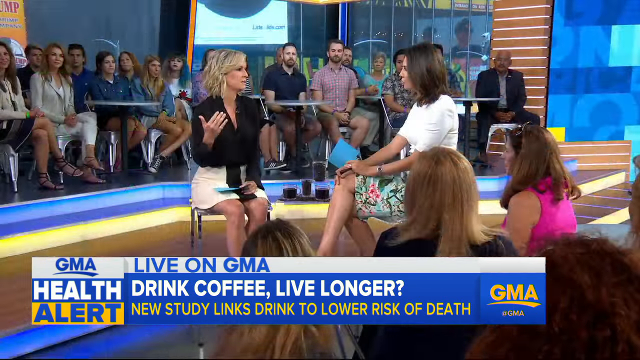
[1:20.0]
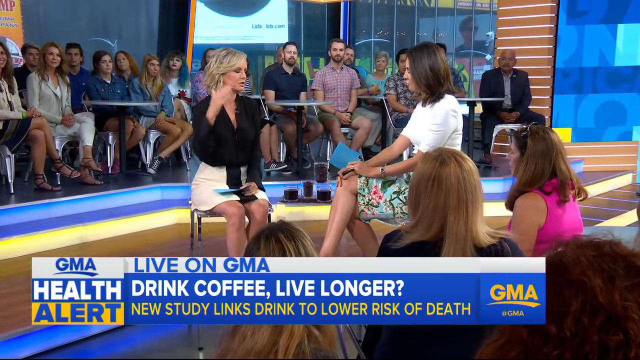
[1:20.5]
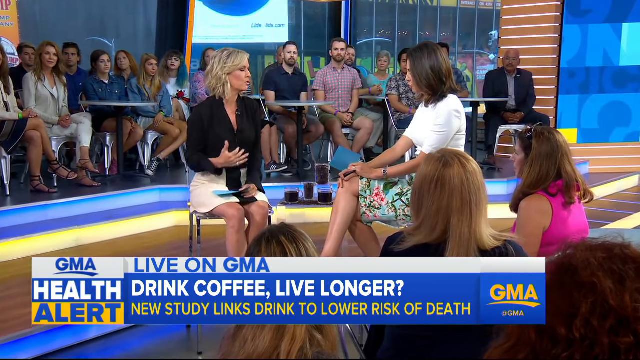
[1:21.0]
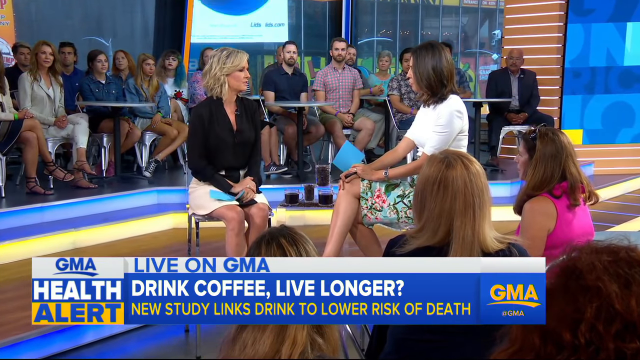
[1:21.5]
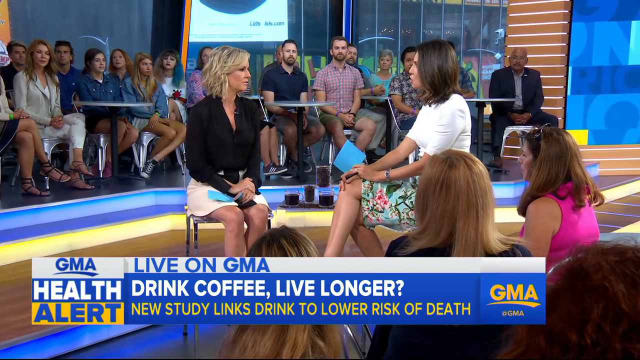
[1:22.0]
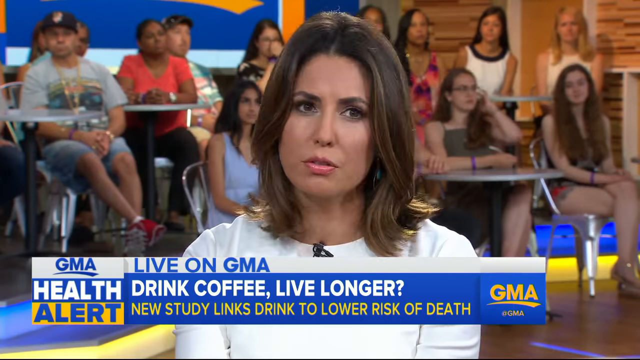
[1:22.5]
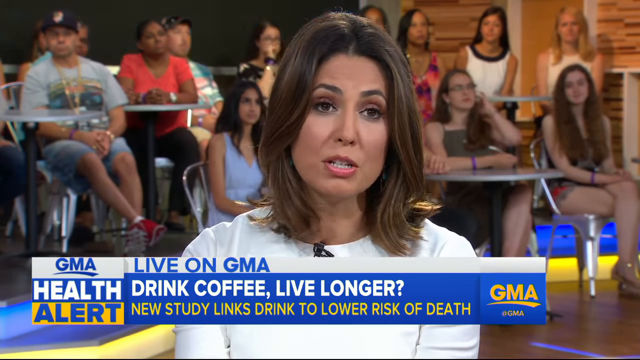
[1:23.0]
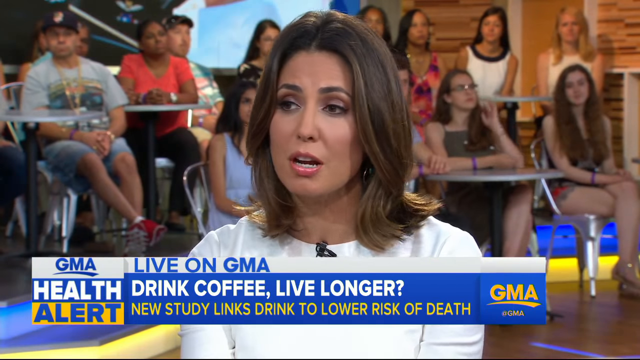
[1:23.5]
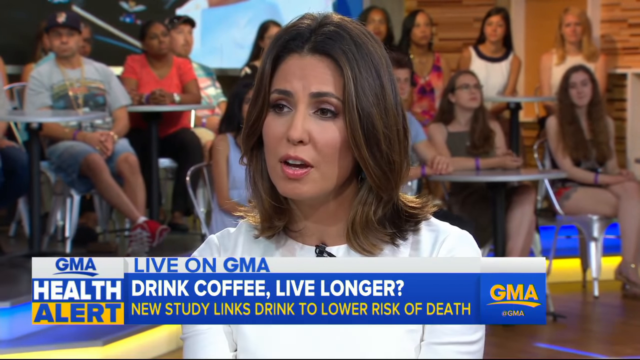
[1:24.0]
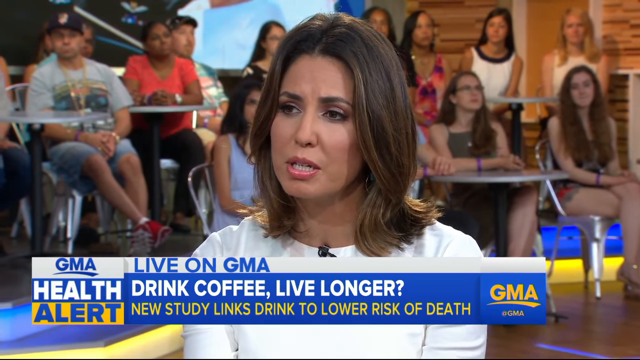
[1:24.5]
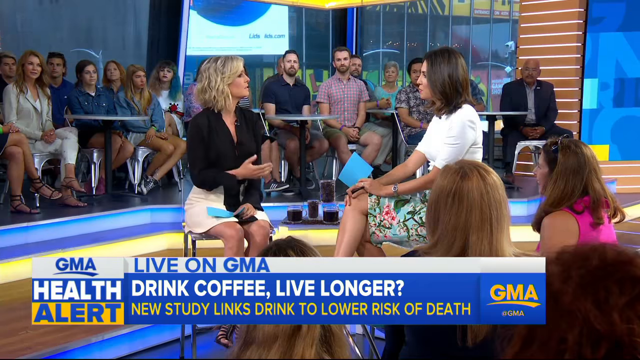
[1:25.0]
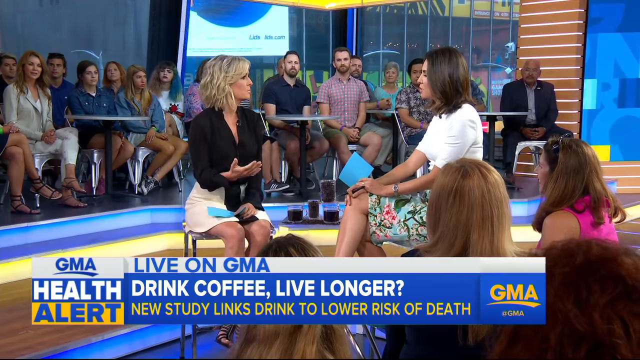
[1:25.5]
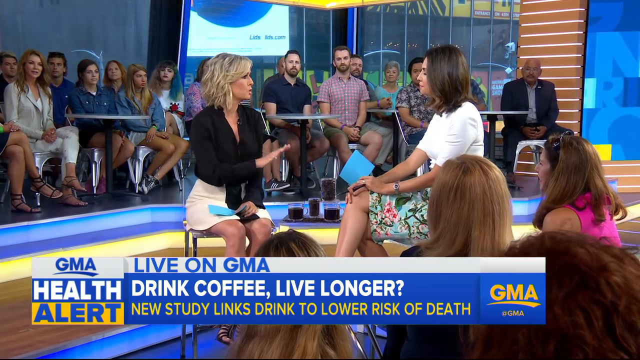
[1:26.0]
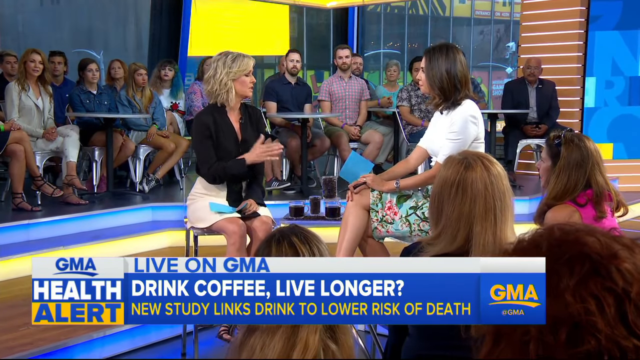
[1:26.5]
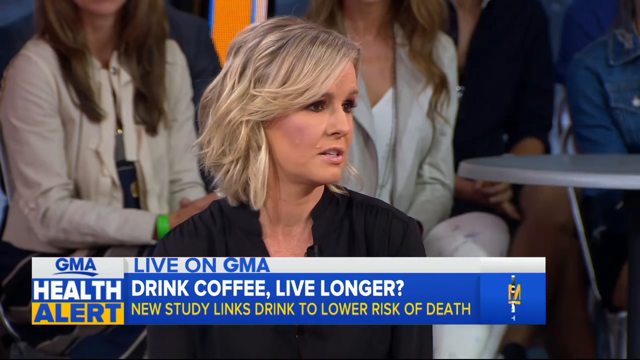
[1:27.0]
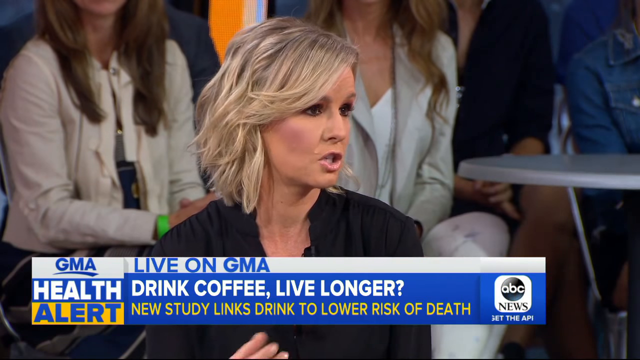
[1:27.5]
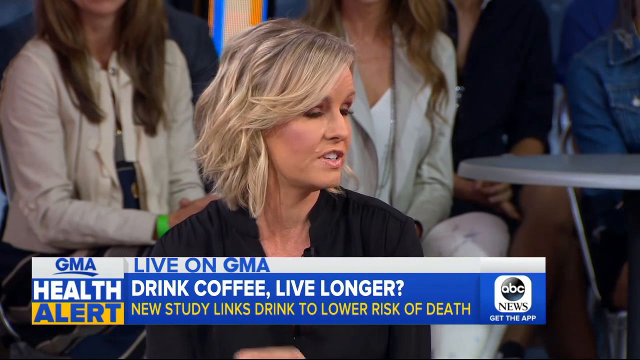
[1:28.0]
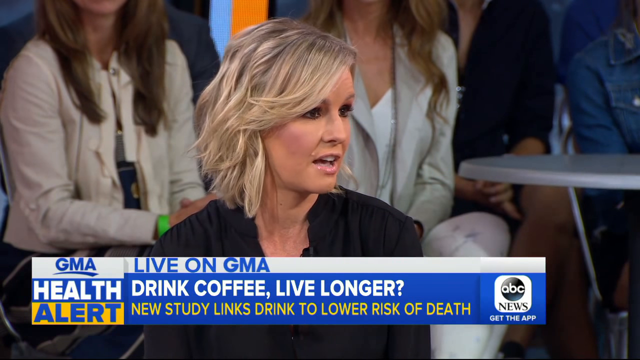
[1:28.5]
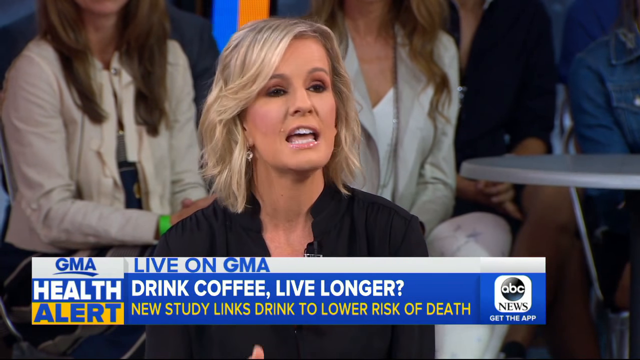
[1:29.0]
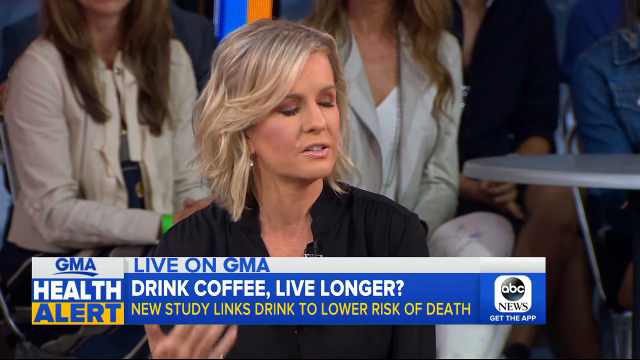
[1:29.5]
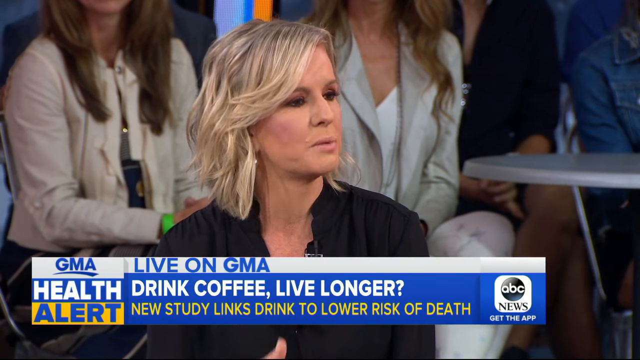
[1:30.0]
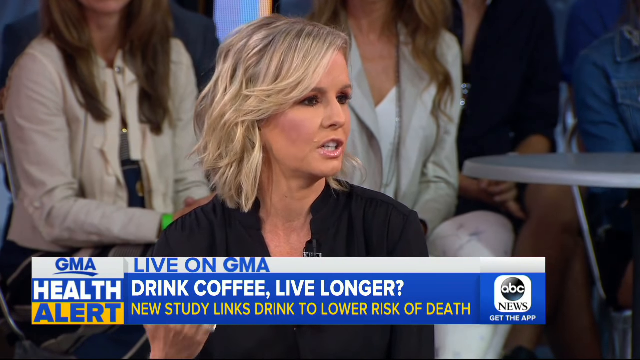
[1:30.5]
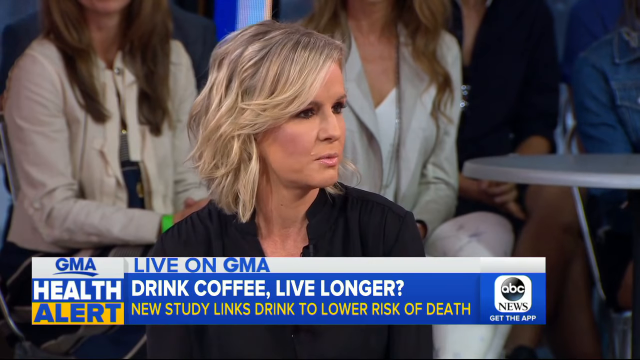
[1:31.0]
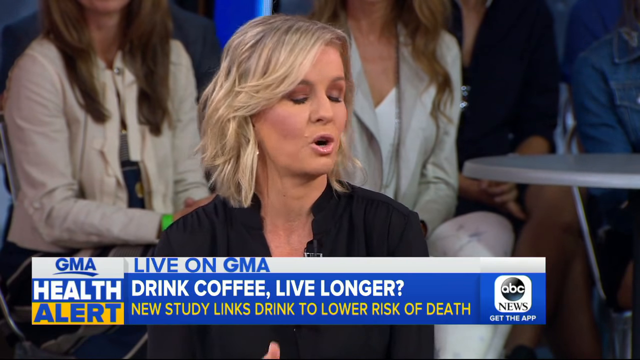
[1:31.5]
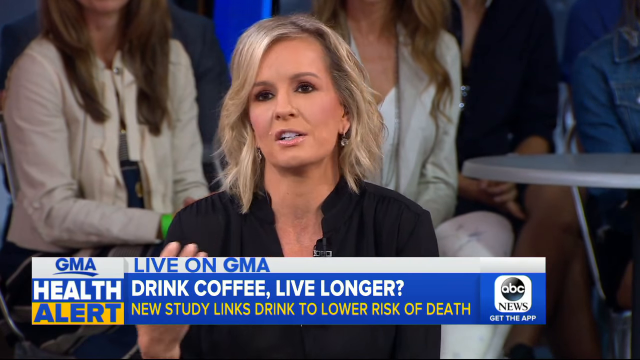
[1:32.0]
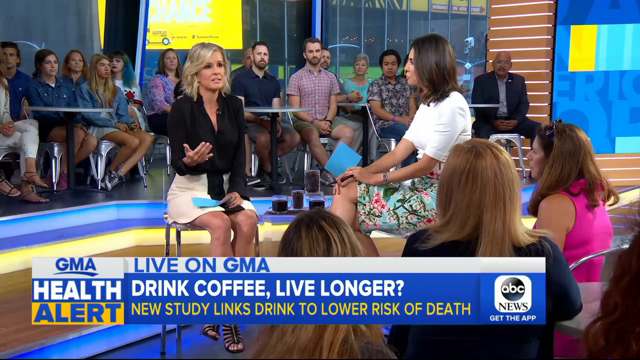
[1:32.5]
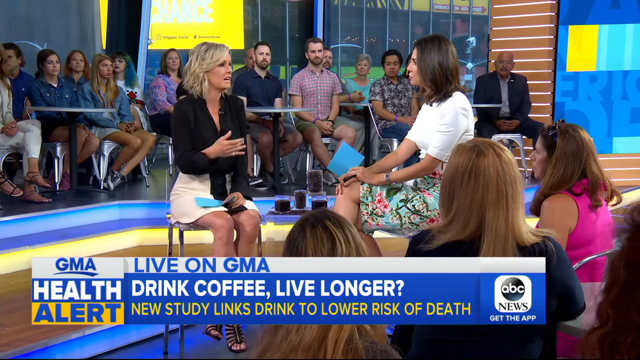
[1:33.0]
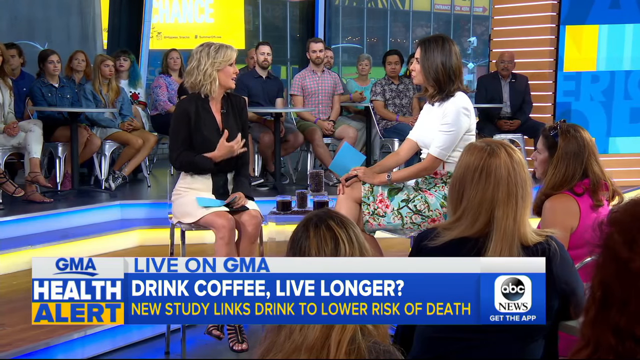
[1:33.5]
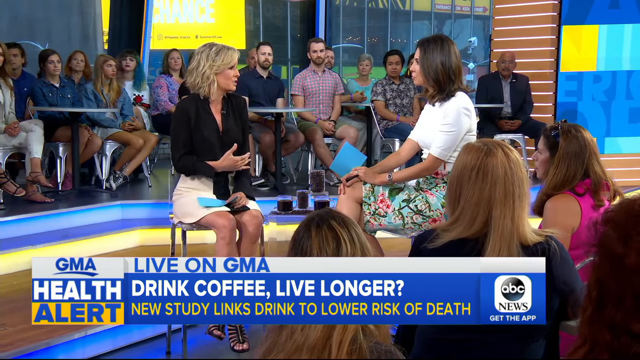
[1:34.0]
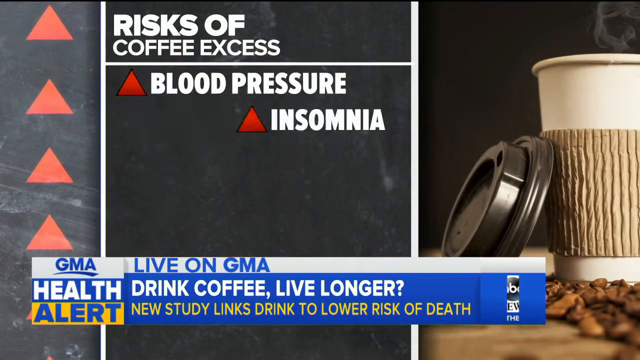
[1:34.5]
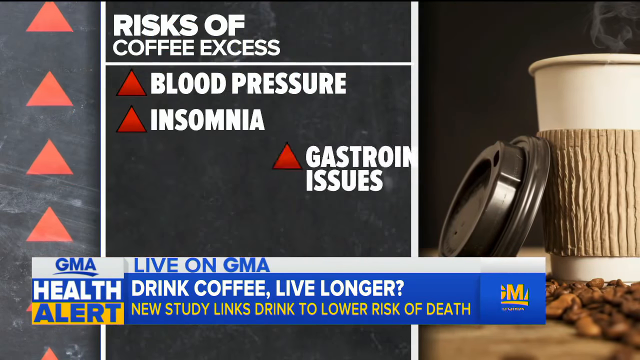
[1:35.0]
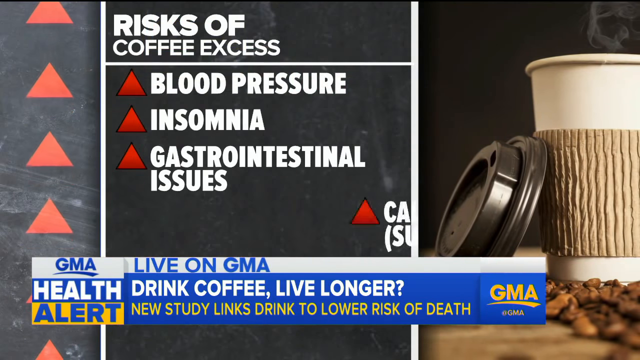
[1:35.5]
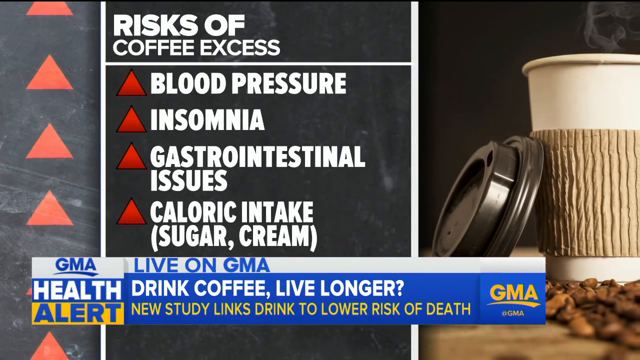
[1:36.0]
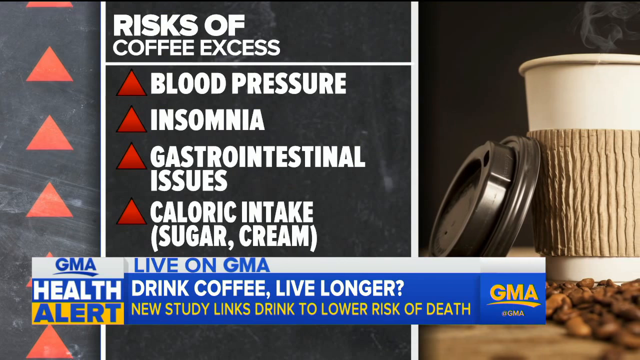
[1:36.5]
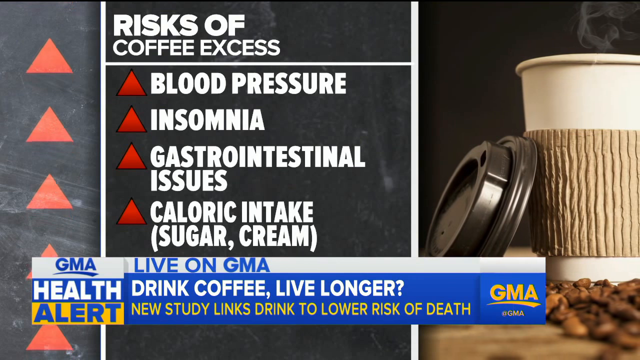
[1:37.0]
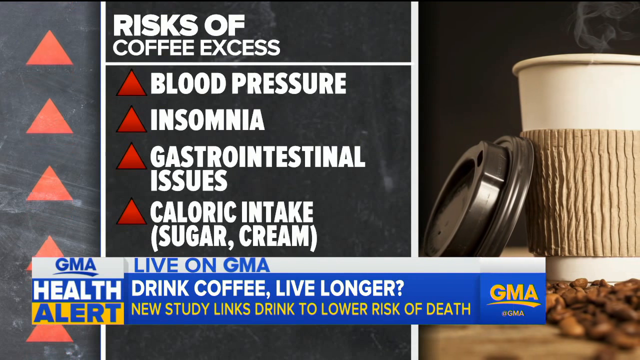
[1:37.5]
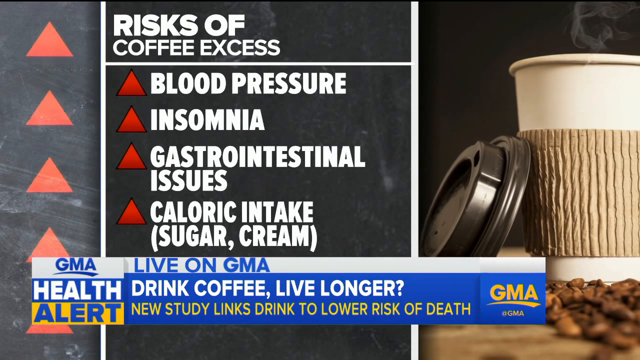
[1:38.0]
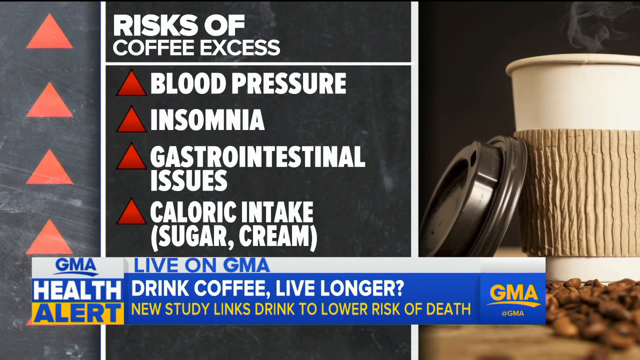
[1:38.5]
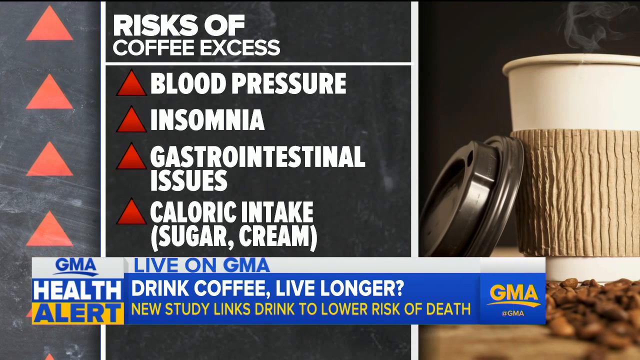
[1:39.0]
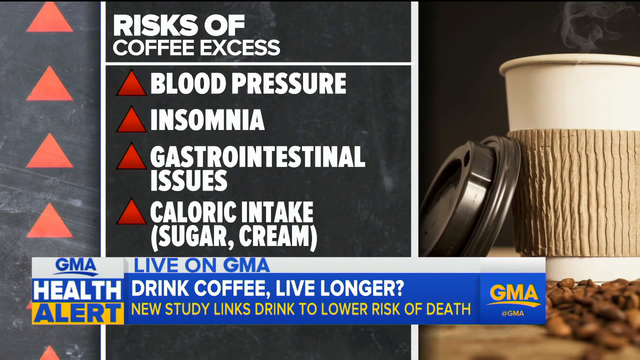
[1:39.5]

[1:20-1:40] The presenter talks to Dr. Jennifer, who then speaks again, demonstrating with her hand. A screen on the risk of coffee excess lists blood pressure, insomnia, gastrointestinal issues, caloric intake, and sugar and cream, with red indications on a black background. Near them is a plastic cup of coffee with a black plastic cover that is opened. Dr. Jennifer presents on the risk of coffee excess with a serious facial expression.